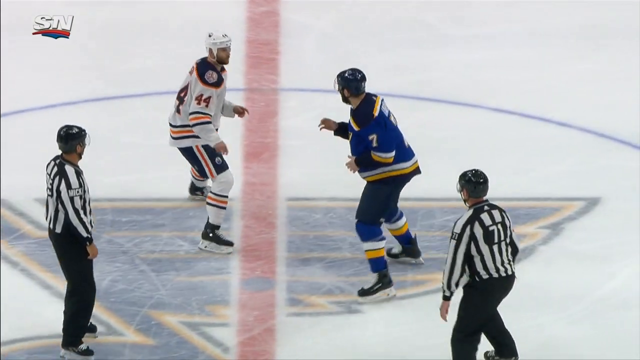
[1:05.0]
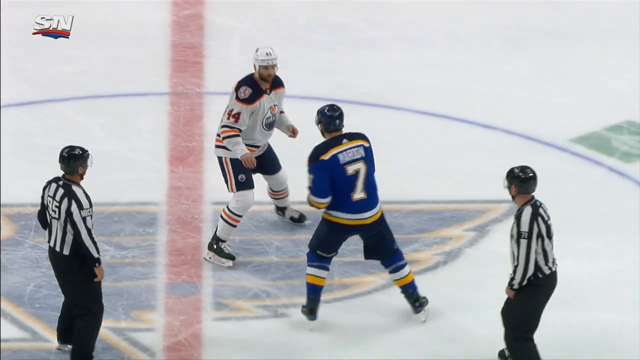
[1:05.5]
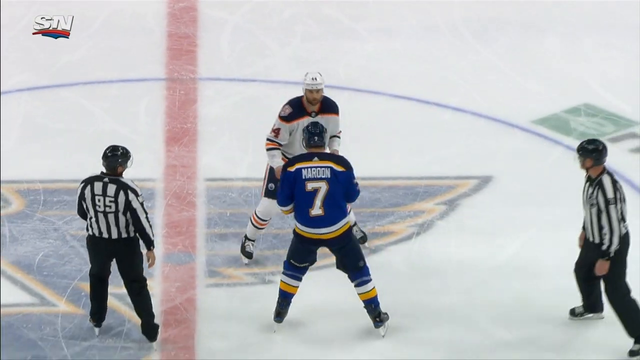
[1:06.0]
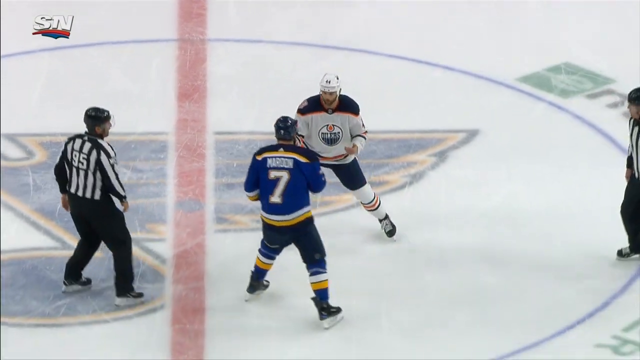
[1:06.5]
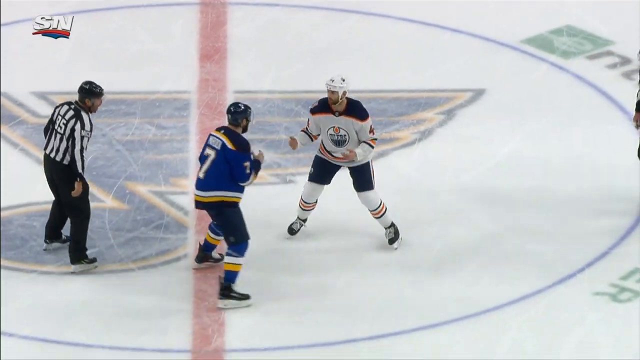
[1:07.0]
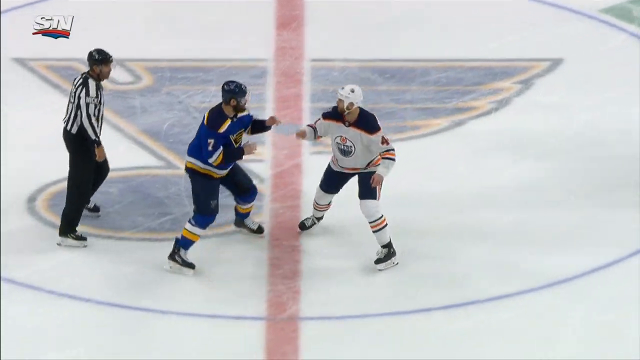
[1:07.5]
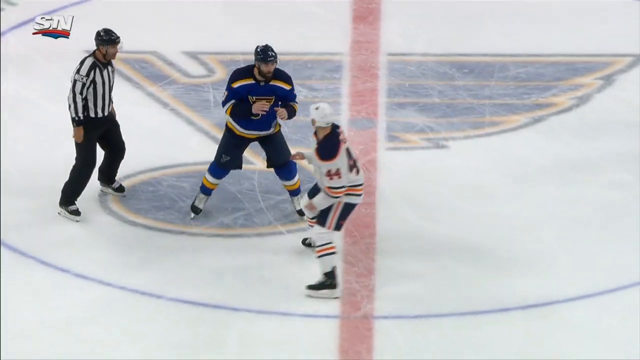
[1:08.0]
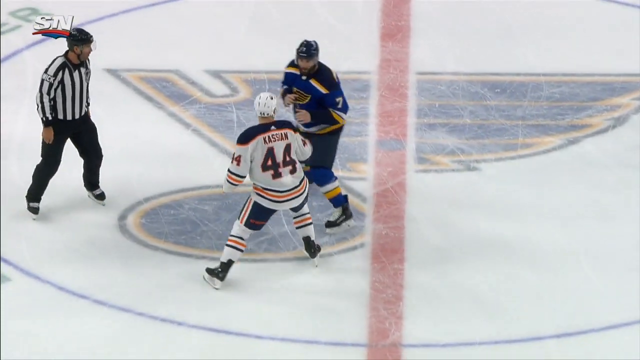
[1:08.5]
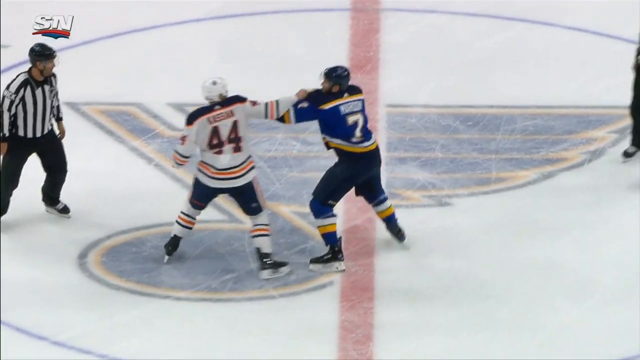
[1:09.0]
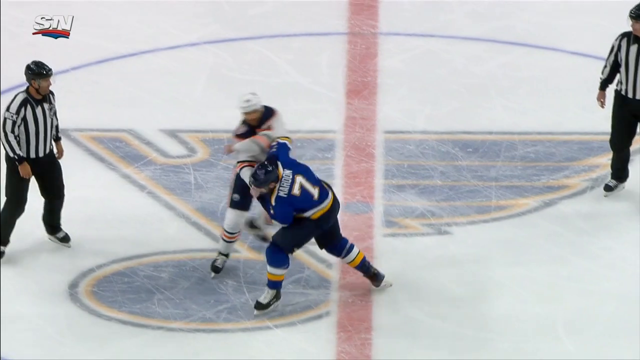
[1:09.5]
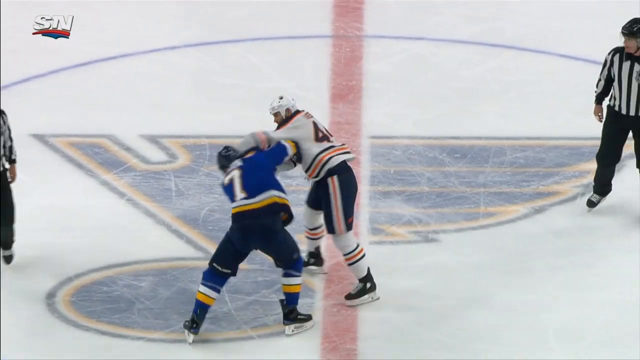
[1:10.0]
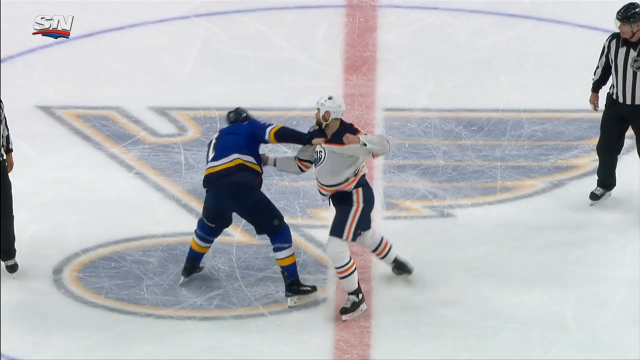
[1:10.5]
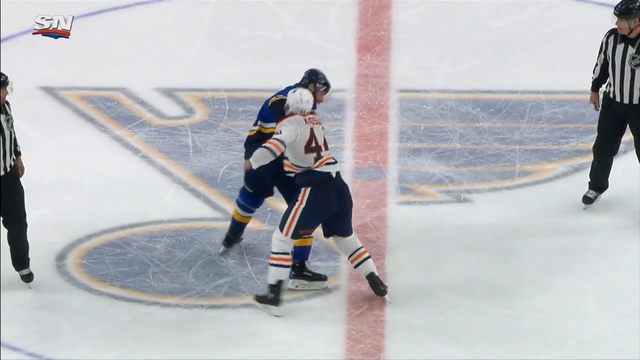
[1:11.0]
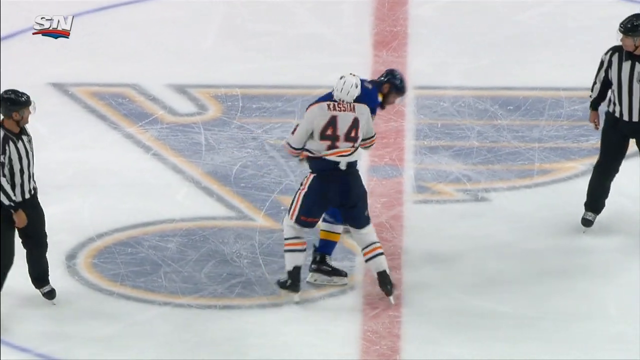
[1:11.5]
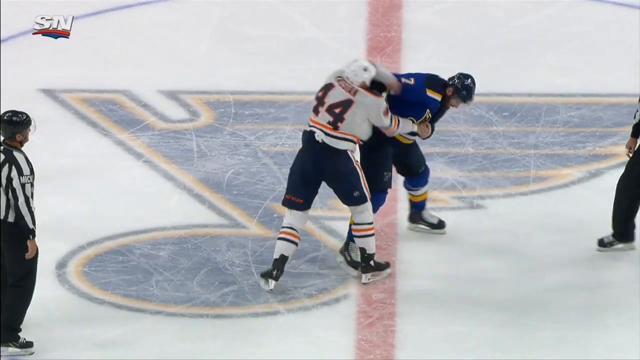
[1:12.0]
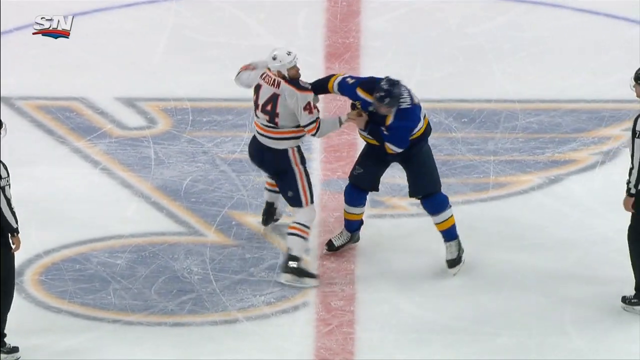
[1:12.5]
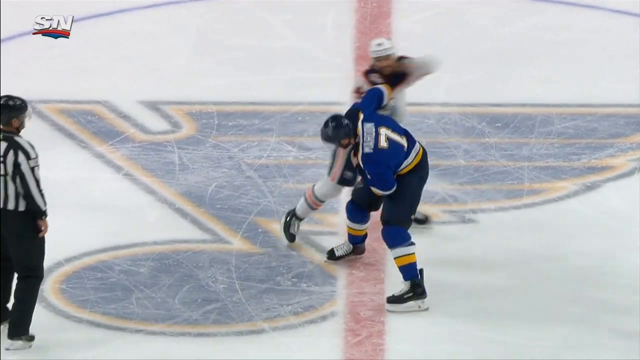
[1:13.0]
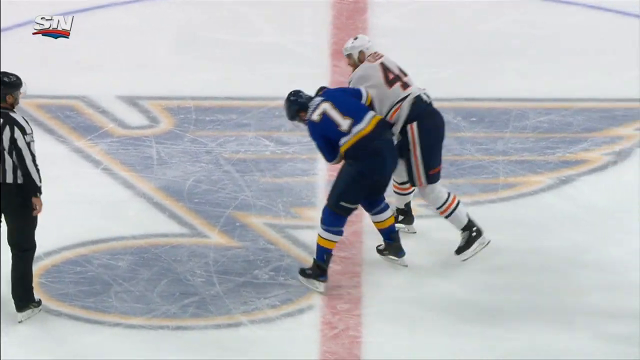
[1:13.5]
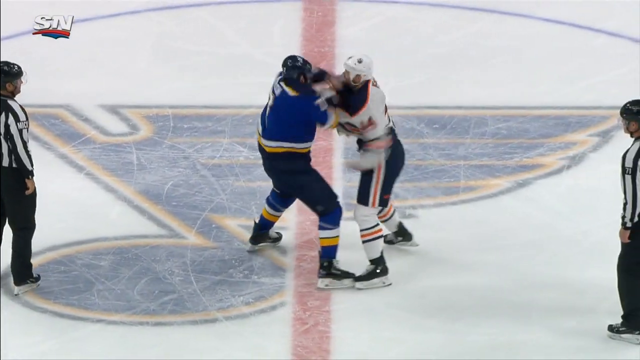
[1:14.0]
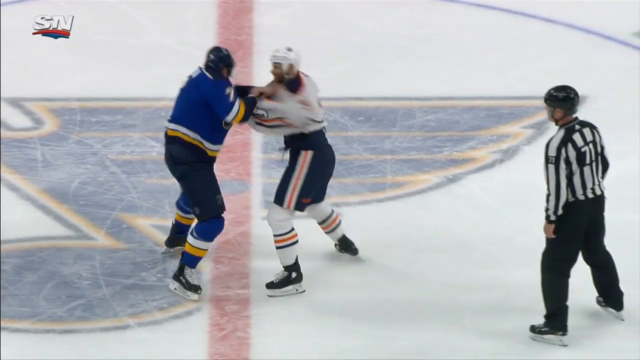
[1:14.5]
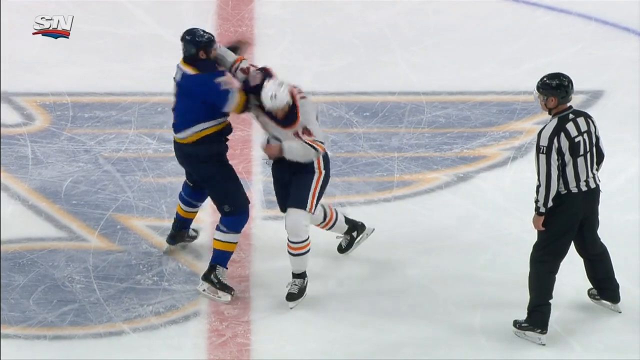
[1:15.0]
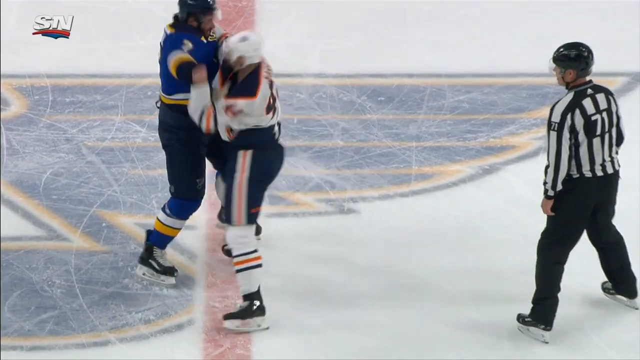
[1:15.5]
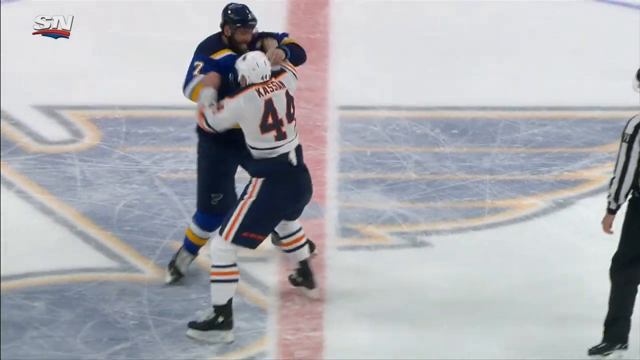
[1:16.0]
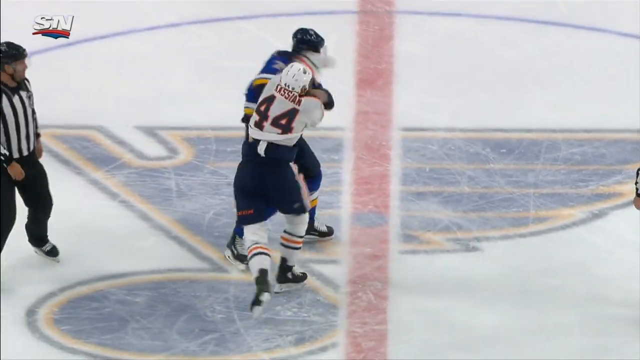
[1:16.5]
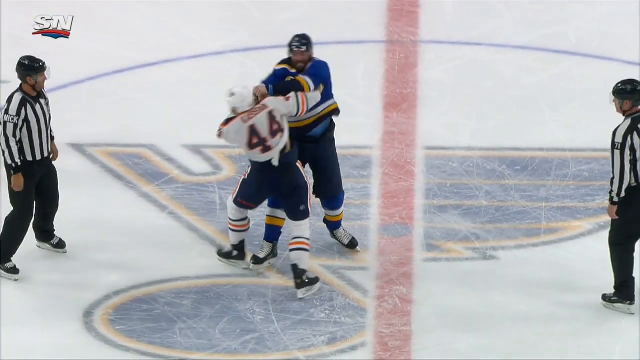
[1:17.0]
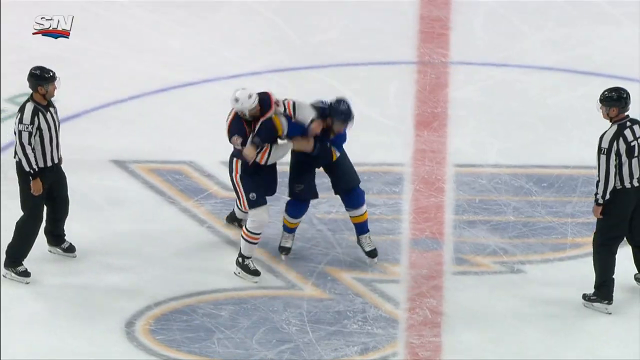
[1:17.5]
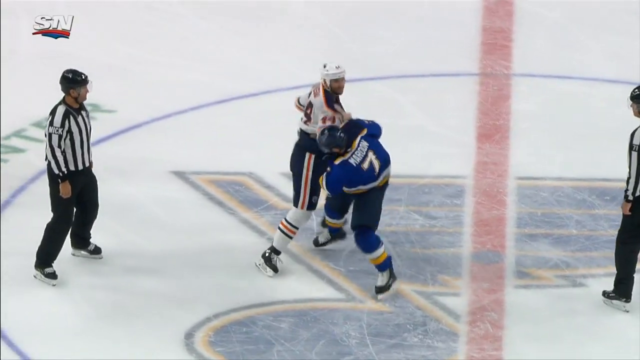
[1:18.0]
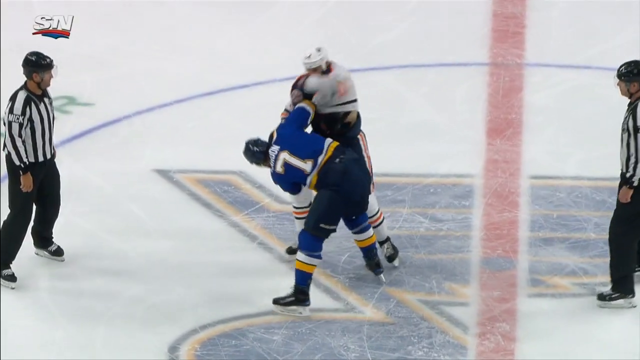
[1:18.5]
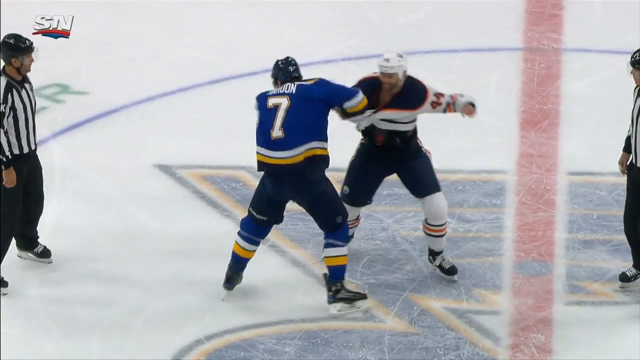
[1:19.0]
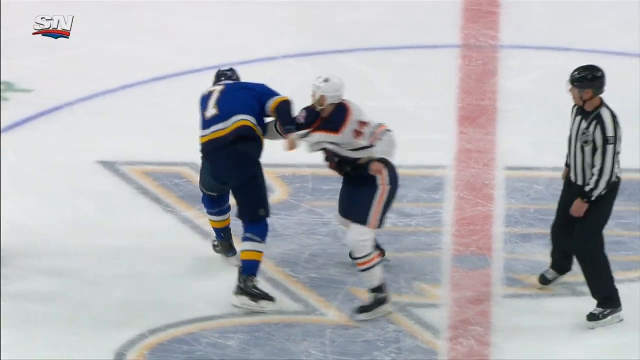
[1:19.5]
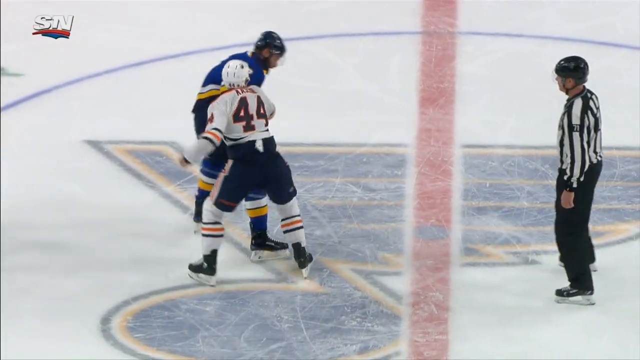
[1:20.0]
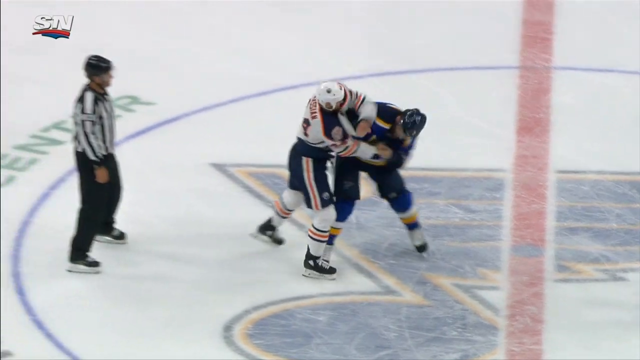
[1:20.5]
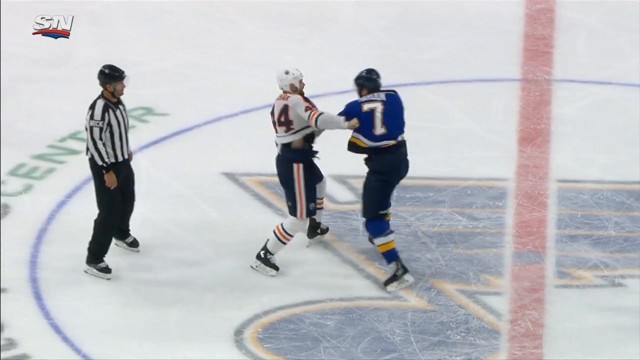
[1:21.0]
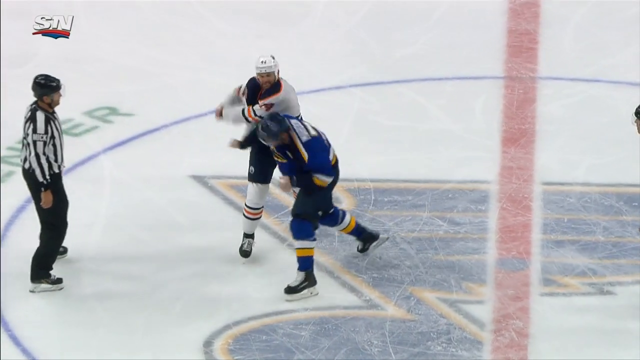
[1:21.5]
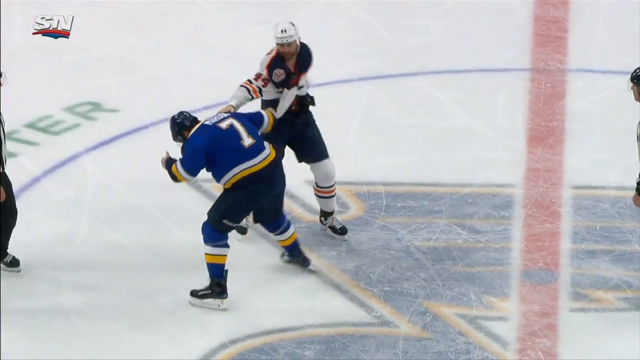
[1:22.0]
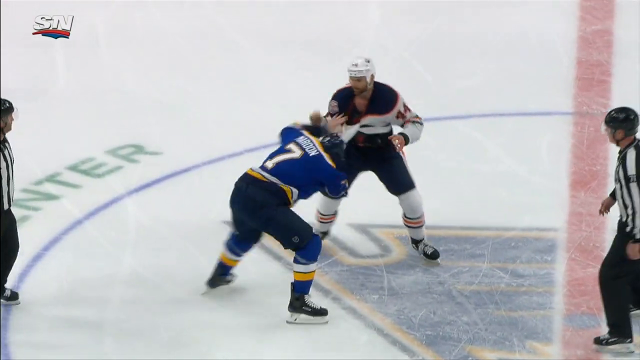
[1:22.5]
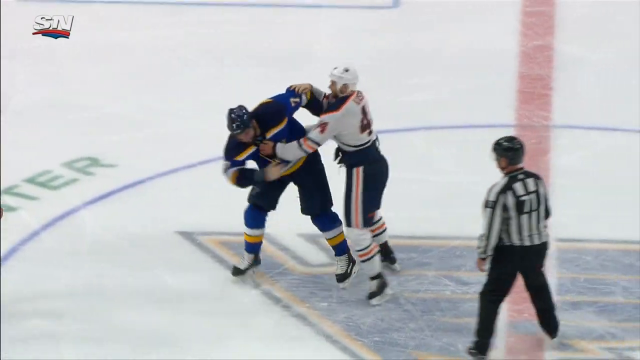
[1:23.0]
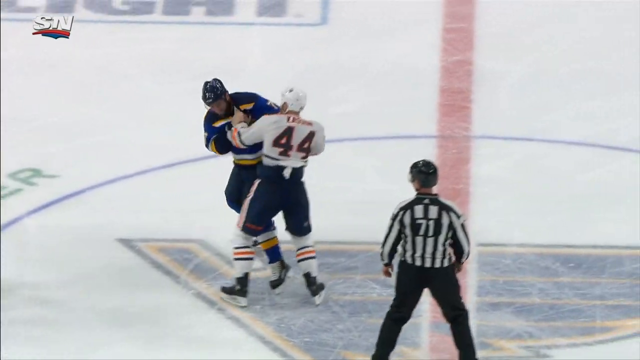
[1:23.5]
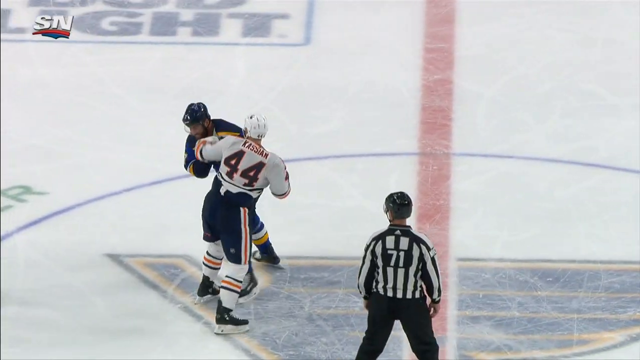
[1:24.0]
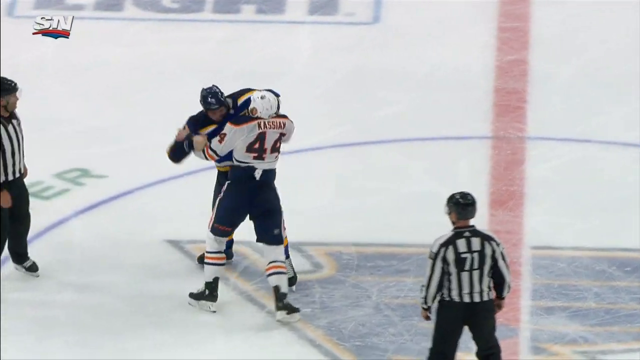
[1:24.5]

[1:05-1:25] The two players skate around each other at center ice. One grabs the other and begins throwing punches; the other player, in blue, waits and then begins his assault. Two referees and the two players are shown, all at center ice, on top of the St. Louis Blues logo. Kassian is number 44 in the white jersey of the Edmonton Oilers, and Maroon is number 7 in blue for the St. Louis Blues. Kassian appears to get the most punches in. Both players' helmets are still on at the end. The fight is not very eventful.